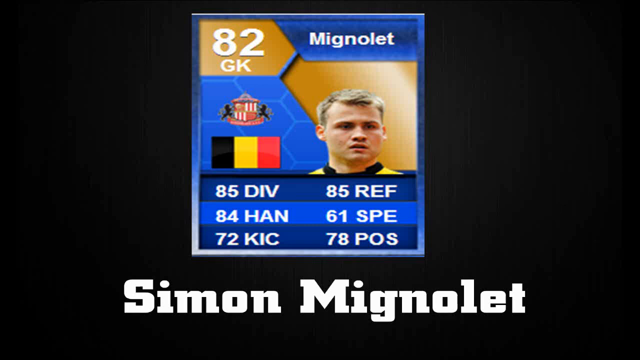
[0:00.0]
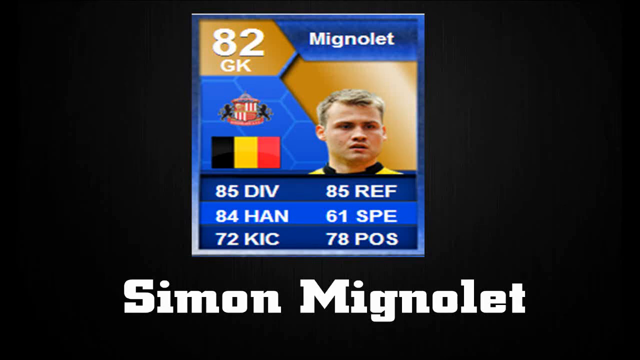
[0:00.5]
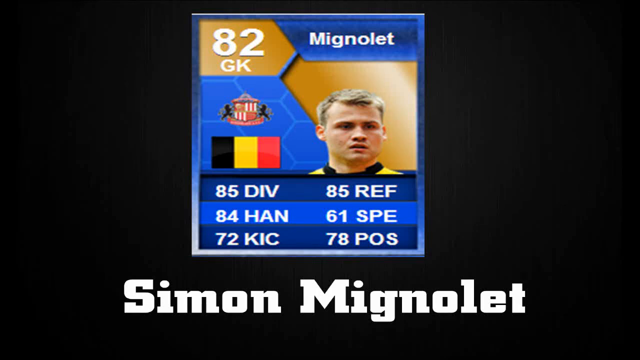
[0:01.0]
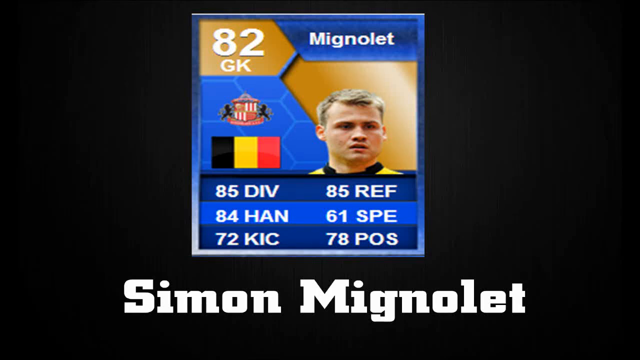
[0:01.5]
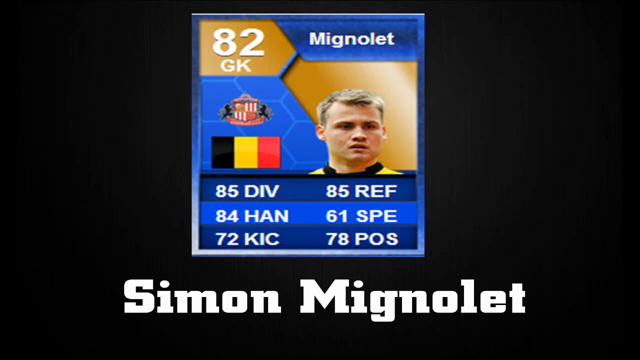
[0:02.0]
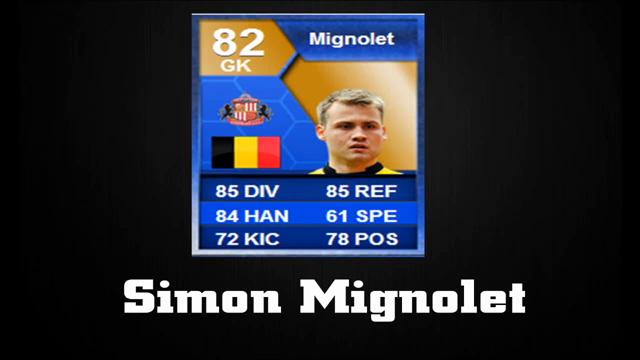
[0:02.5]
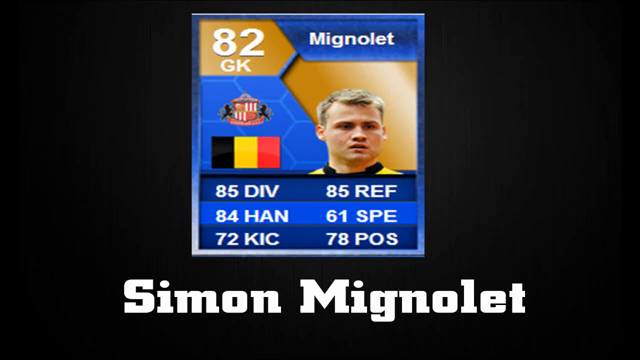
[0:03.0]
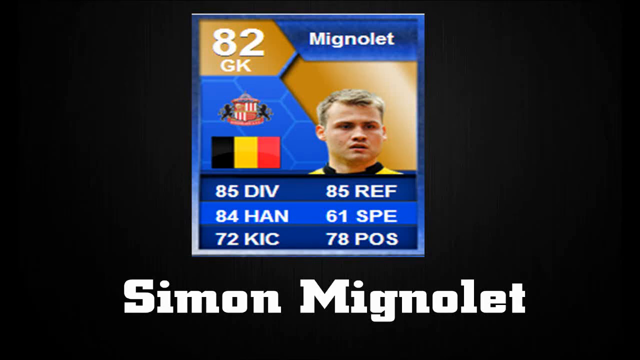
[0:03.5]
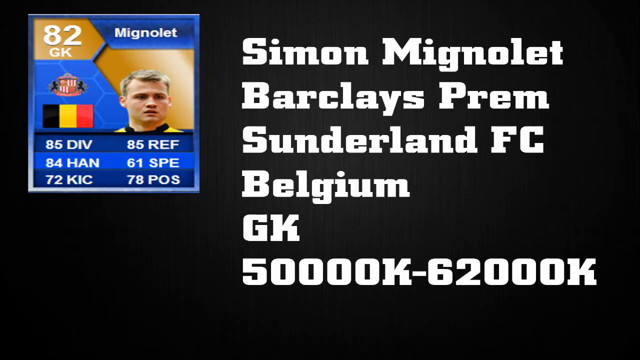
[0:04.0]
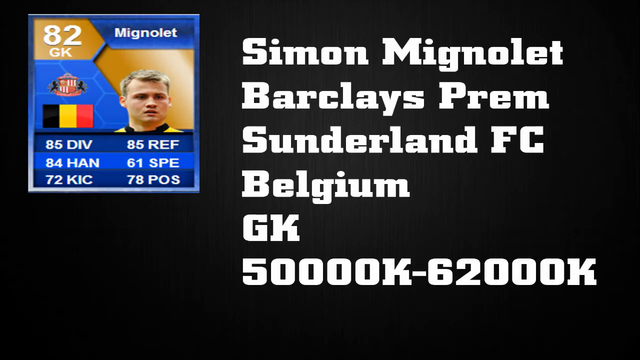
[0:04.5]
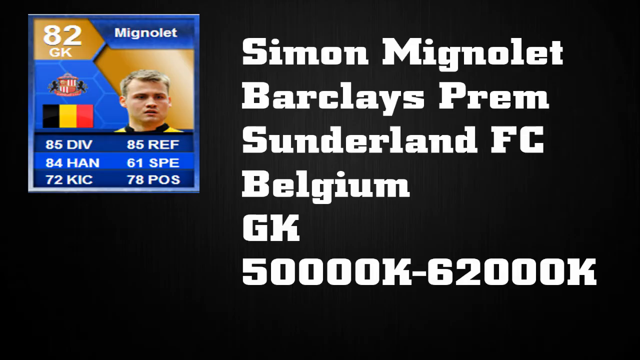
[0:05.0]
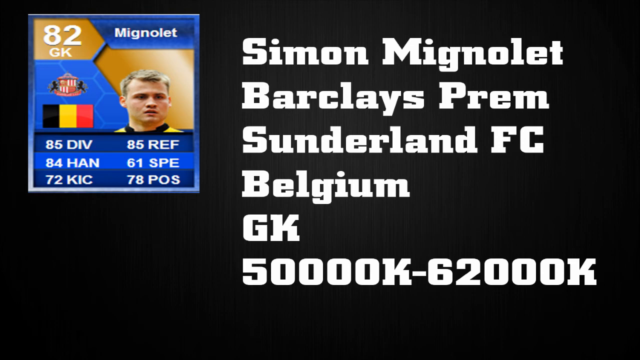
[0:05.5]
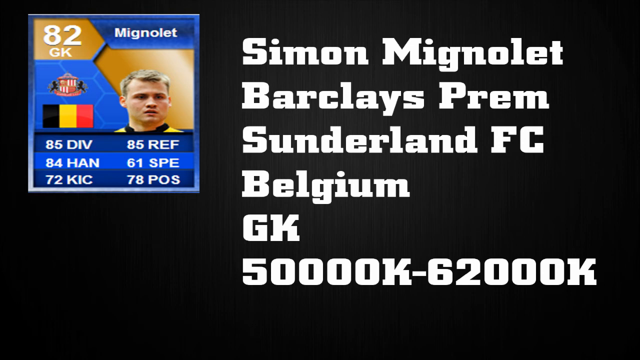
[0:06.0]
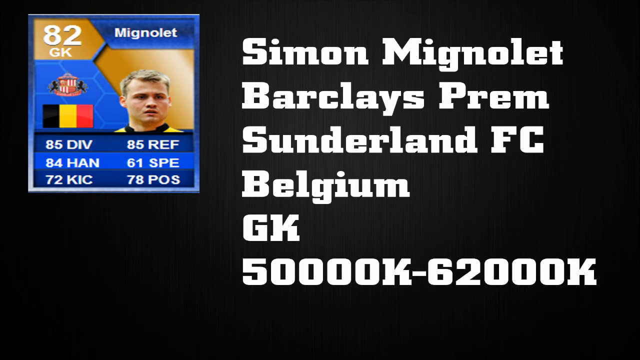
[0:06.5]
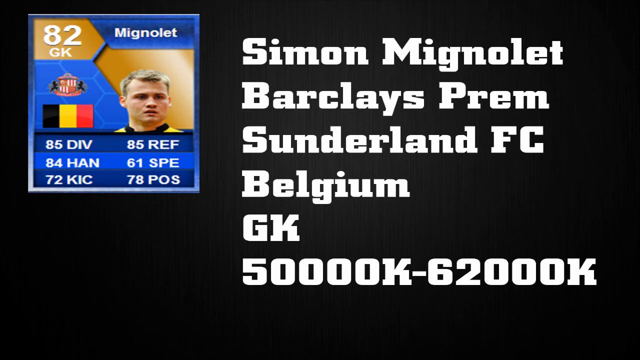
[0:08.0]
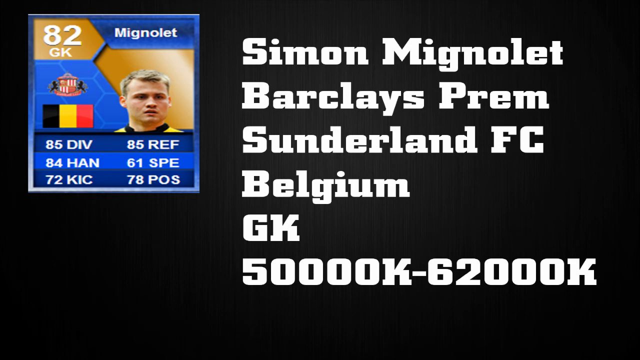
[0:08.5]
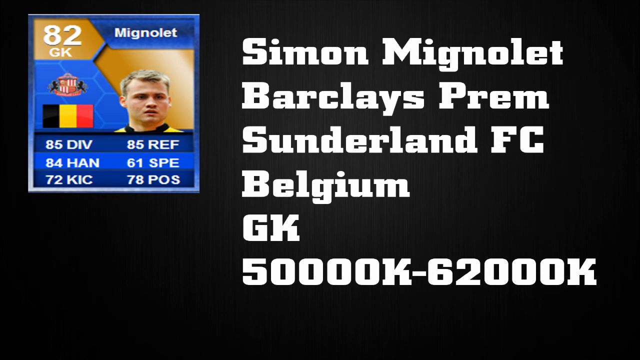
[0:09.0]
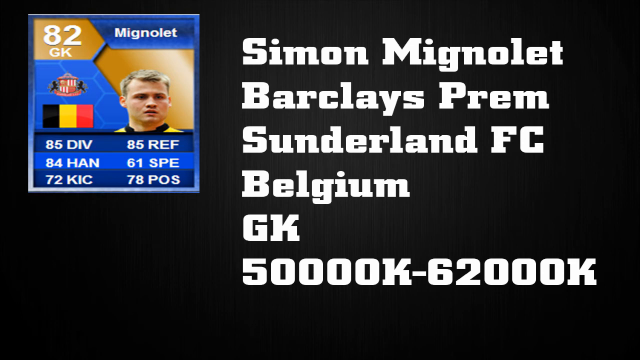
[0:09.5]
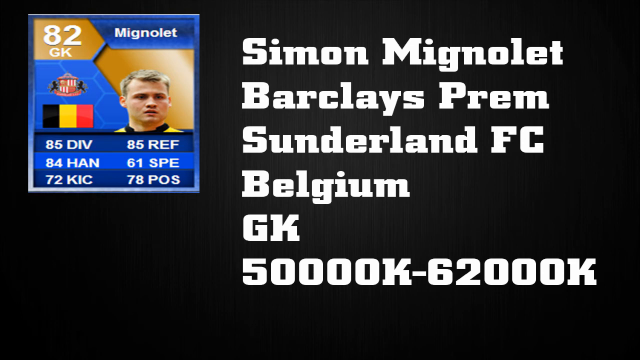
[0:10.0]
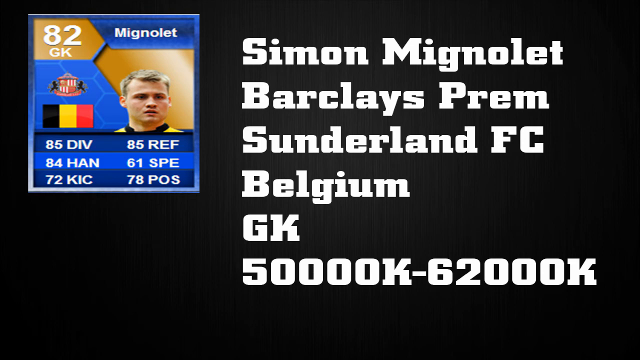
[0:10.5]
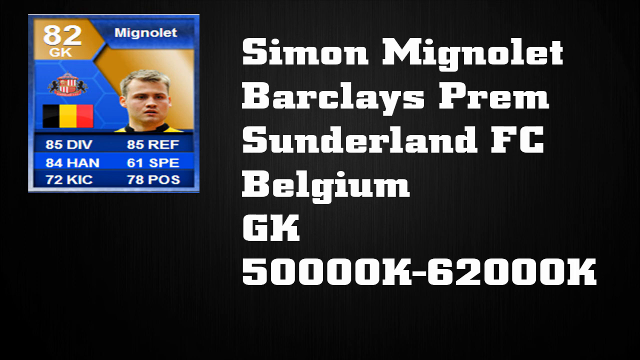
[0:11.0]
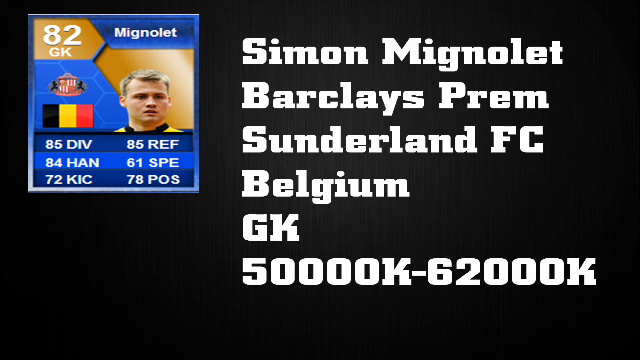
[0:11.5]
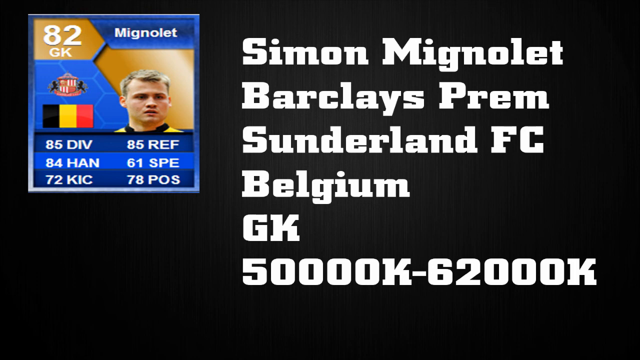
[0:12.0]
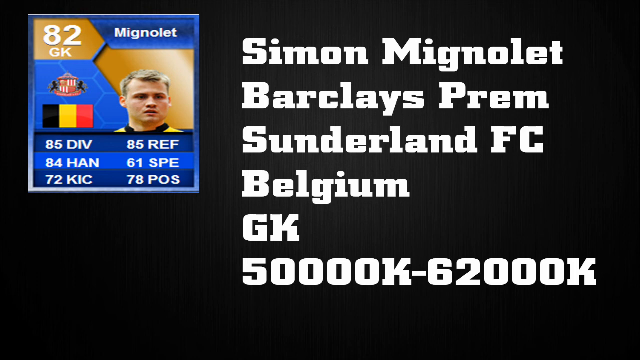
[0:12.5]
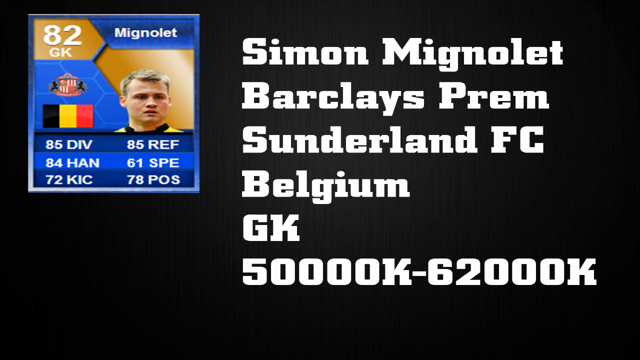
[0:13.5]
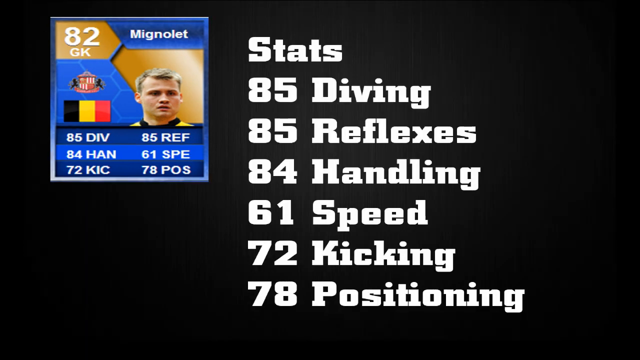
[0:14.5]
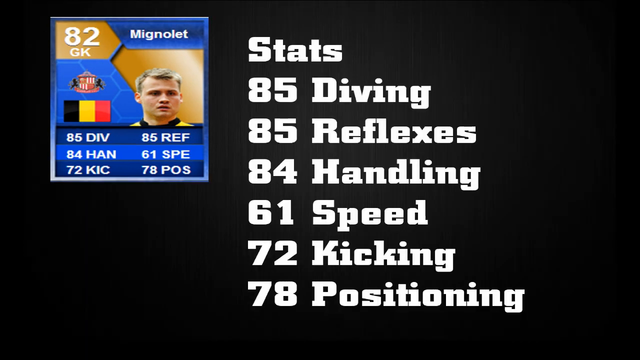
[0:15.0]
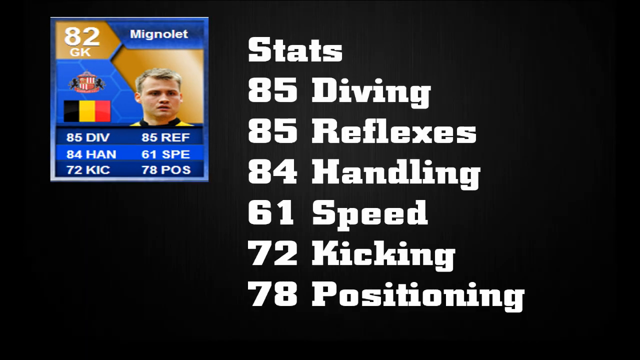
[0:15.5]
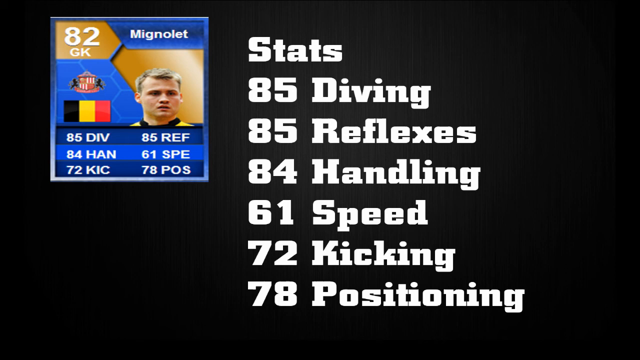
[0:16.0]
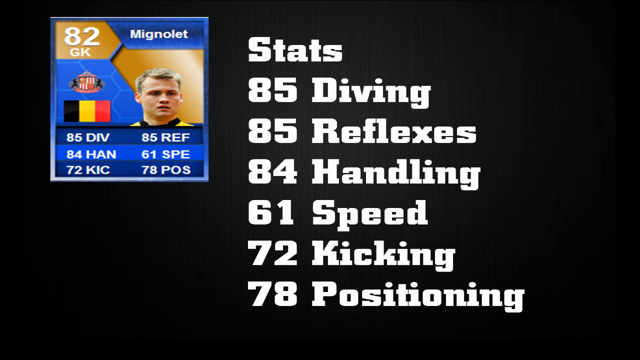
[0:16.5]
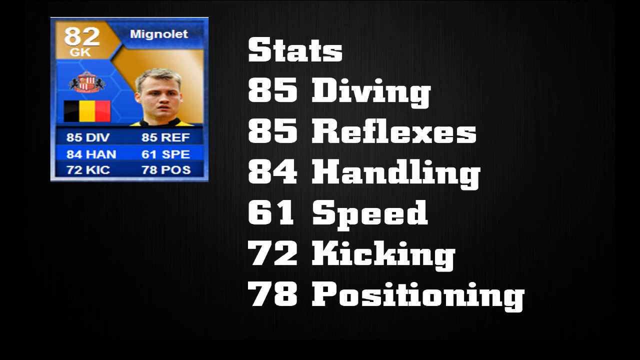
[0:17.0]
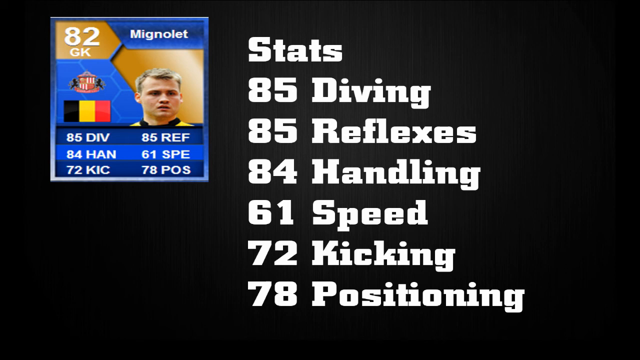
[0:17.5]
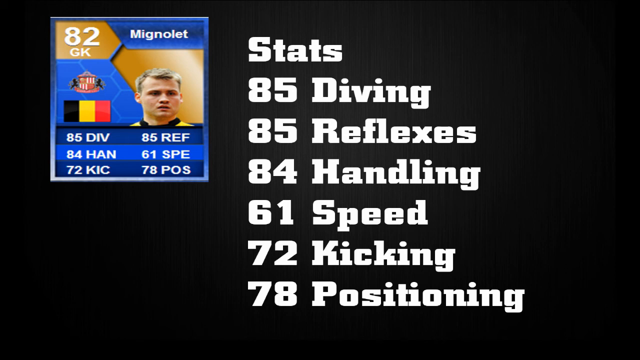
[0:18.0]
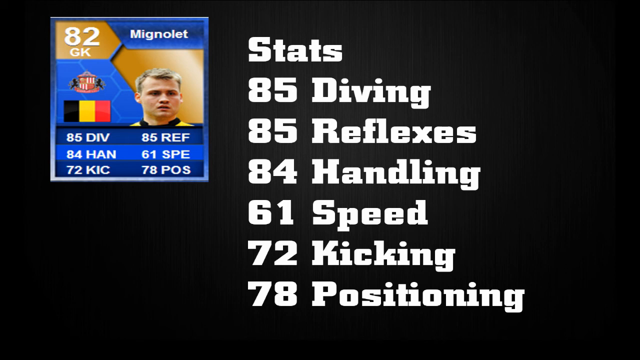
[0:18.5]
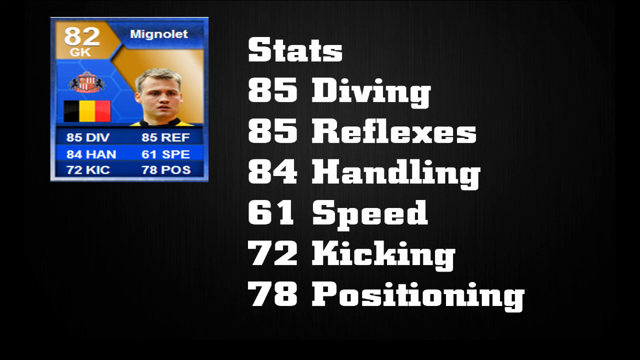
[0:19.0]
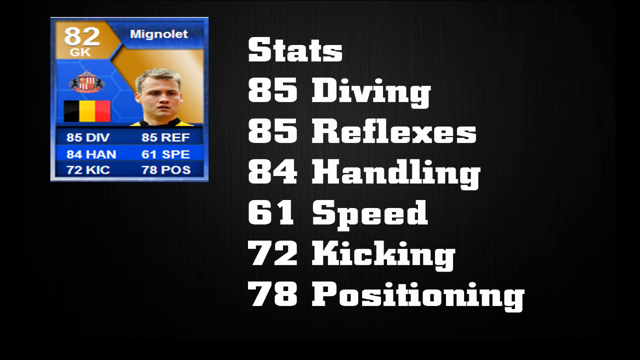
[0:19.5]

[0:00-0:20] The screen is black, and in the middle of it is a blue square. In the top left corner of the square is a smaller gold square with "82k" inside it in white, and to the right of that, in white, is "Mignolet." Beneath that word is a picture of a man's head: he has blonde hair and stares toward the camera, and the top of his shirt is visible, yellow with a black collar. To his left is a small flag with a black stripe, a yellow stripe and a red stripe. Beneath that it reads "85 div hand 72 KC," and to the right of that "85 ref 61 SPE 78 POS." Under the picture, in white, is "Simon Mignolet." The blue picture then moves to the left corner of the screen, and a list of names in white appears to its right: "Simon Mignolet," "Barclays Prim," "Sunderland FC," "Belgium," "GK," "50,000K-62,000K." That list disappears and a new one appears, reading from the top: "Stats," "85 Diving," "85 Reflexes," "84 Handling," "61 Speed," "72 Kicking," "78 Positioning."